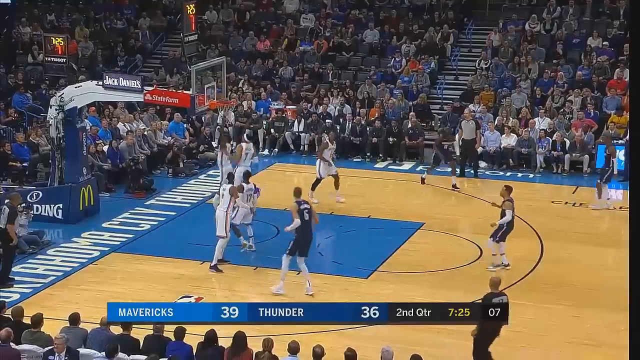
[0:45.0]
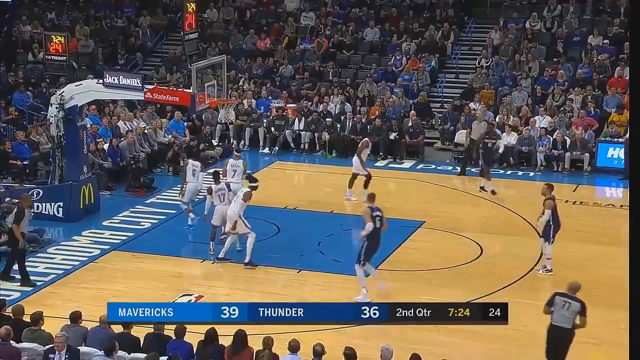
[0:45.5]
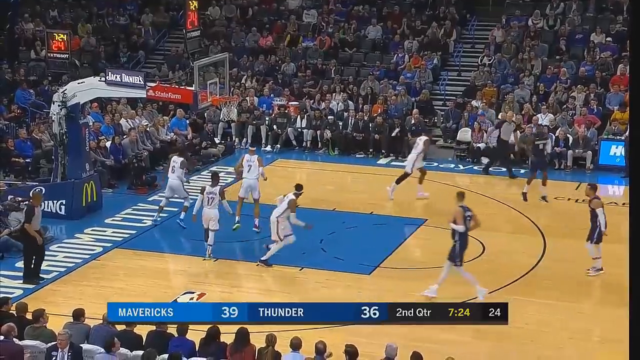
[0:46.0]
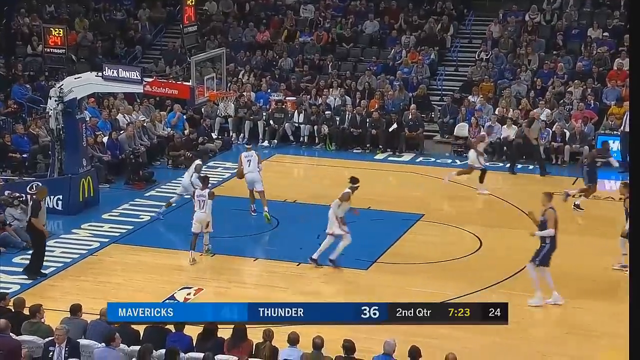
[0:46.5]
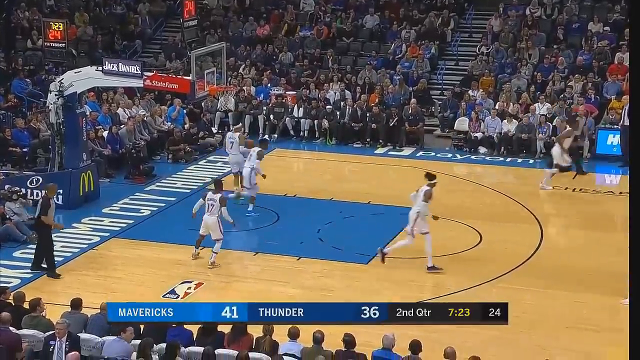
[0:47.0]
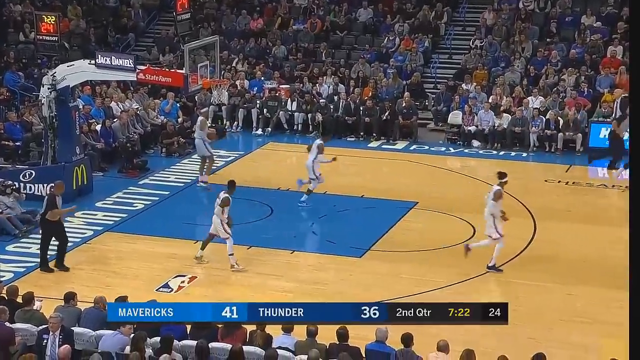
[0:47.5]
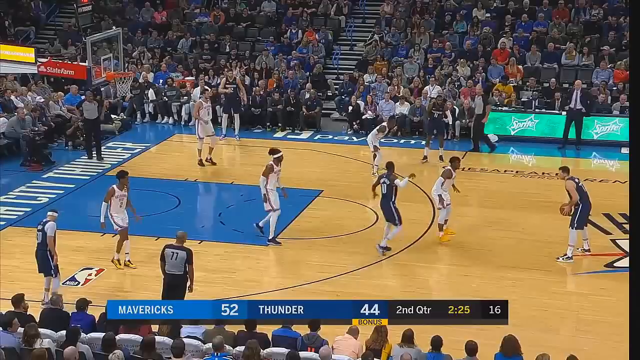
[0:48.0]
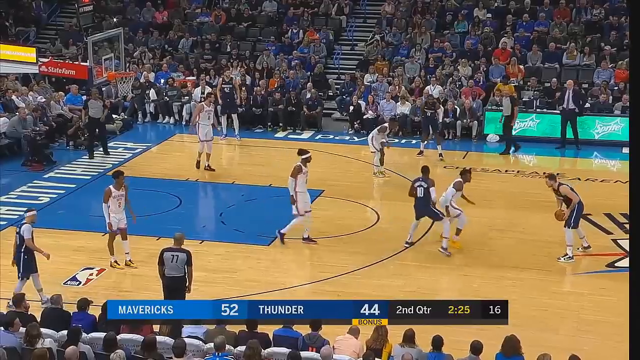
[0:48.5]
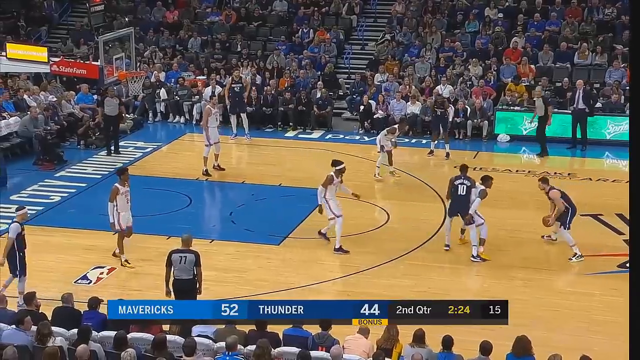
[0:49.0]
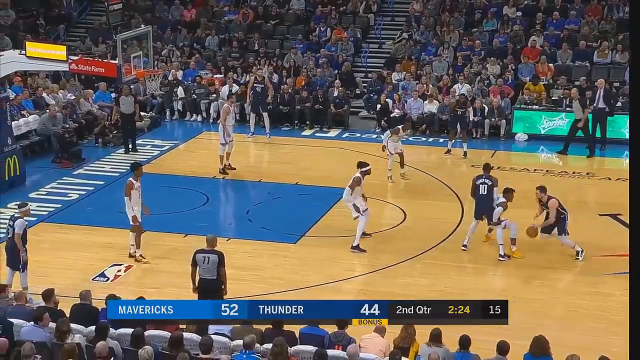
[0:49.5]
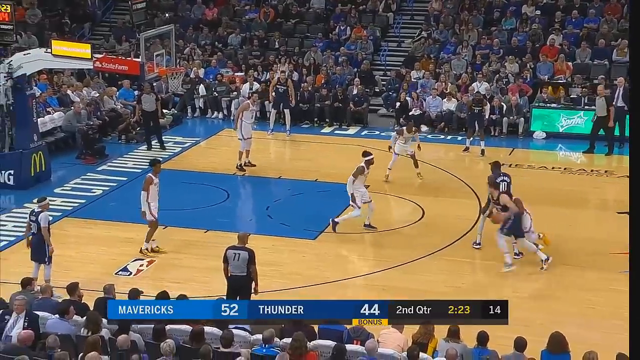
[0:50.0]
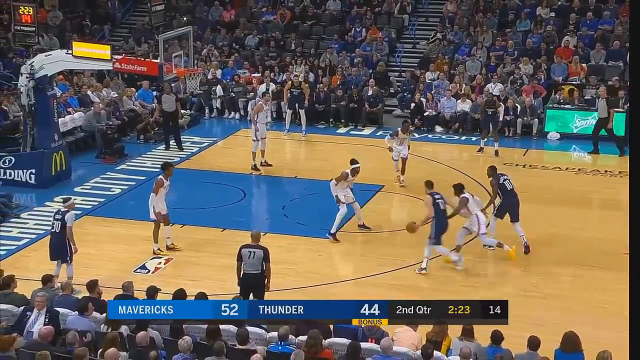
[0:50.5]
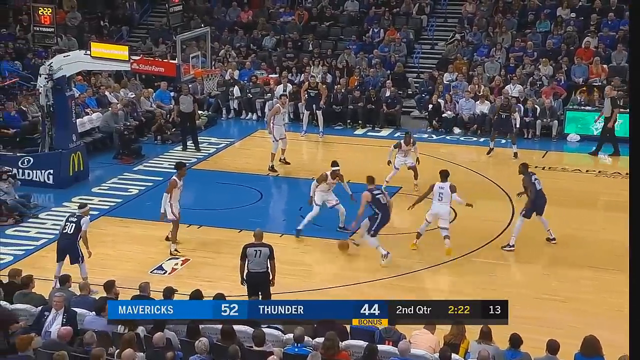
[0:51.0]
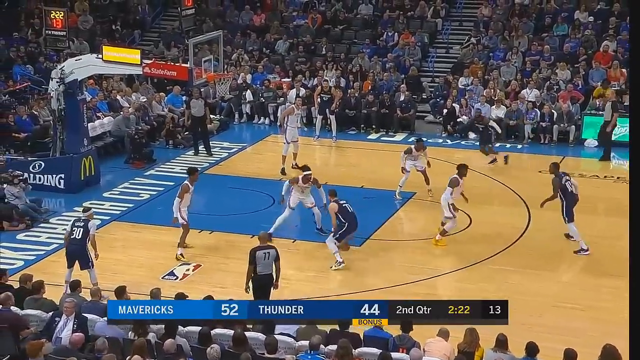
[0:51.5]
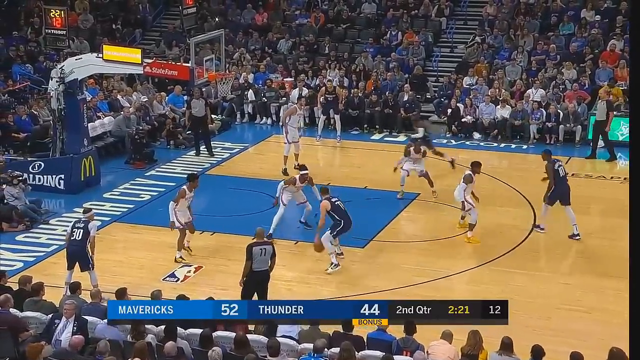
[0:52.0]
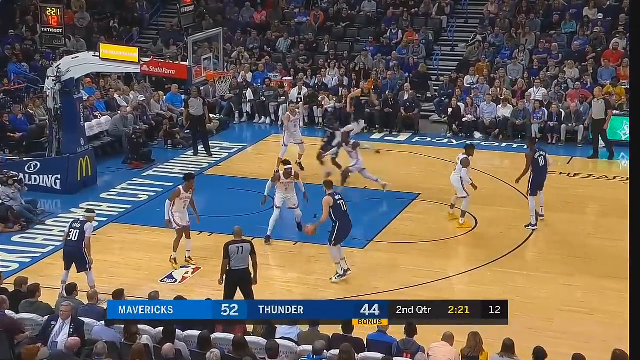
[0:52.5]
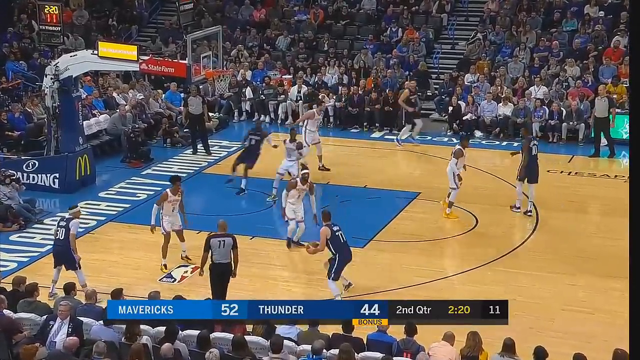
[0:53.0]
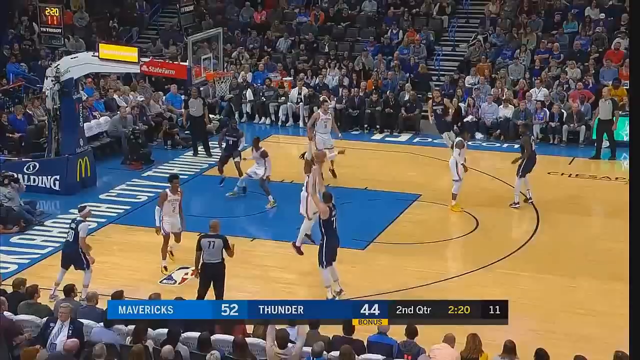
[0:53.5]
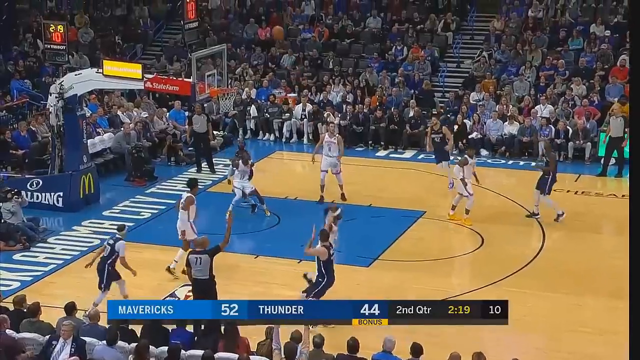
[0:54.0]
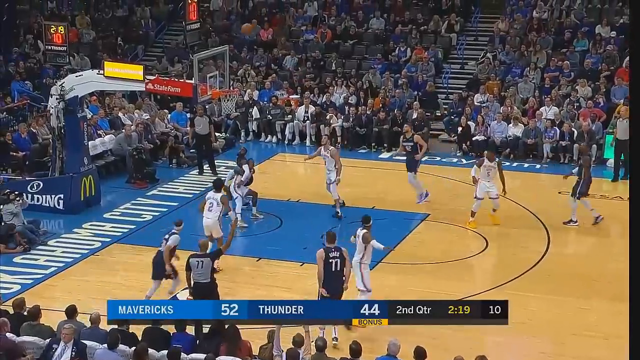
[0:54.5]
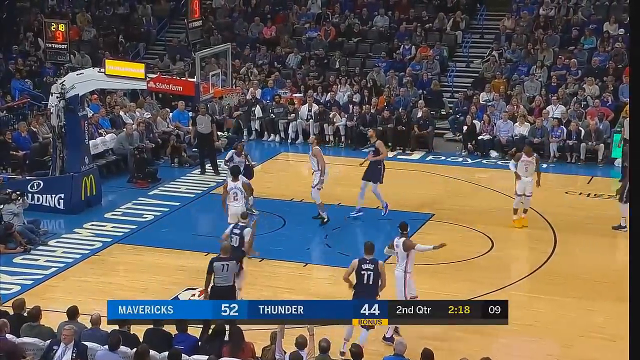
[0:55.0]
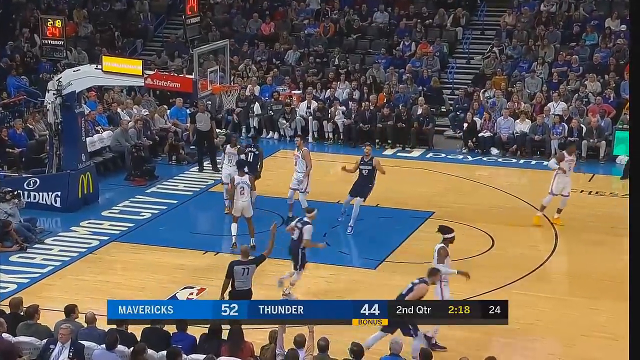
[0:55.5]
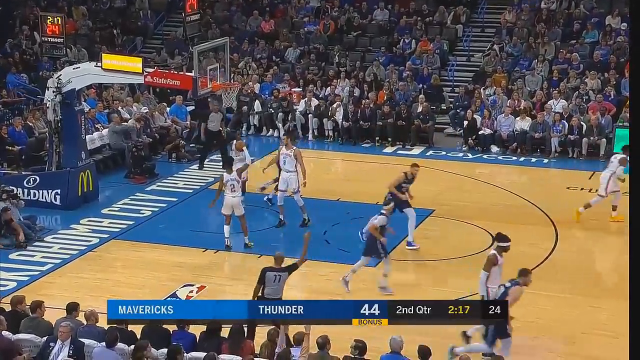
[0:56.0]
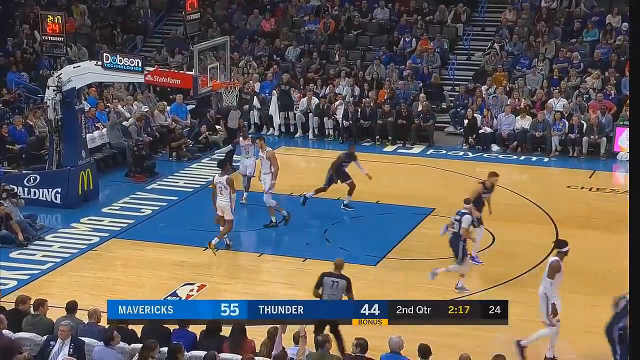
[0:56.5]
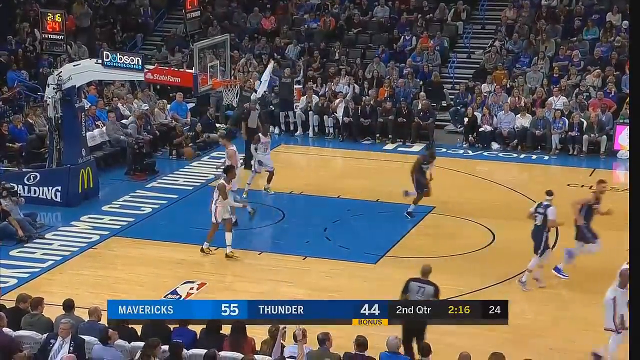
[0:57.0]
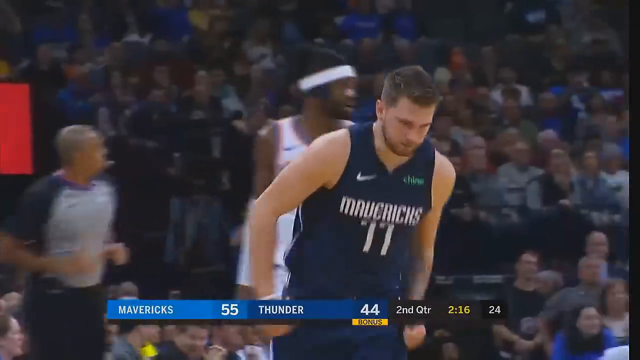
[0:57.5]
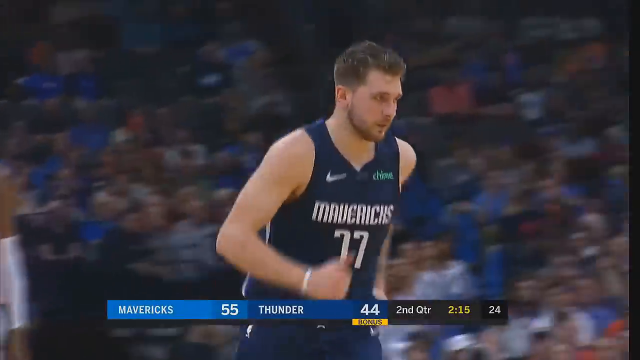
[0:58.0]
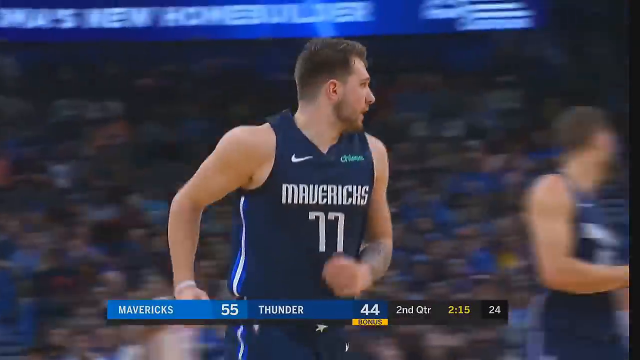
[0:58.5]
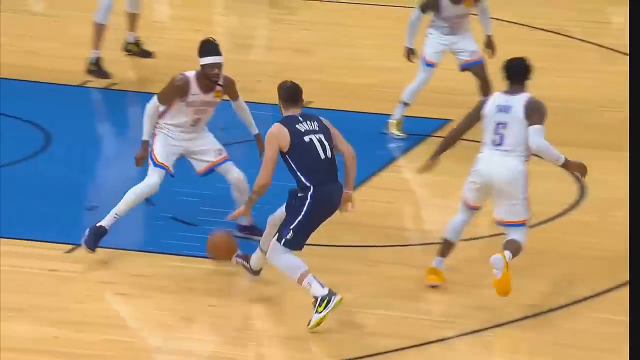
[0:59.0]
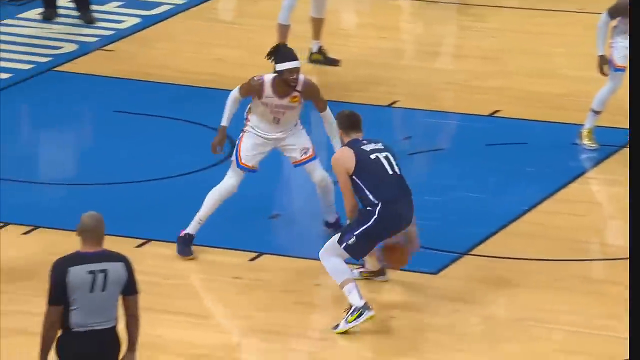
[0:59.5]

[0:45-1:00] Oklahoma City brings up the ball and makes a two-point shot near the basket, and then the video fast-forwards to Doncic having the ball again. He gets by his defender and back out past the three-point line without anyone really near him, and takes a three-point shot that no one challenges much. No one seems to be playing with a lot of urgency. He is then shown jogging back to the other end of the court to take a defensive position. His three-pointer changes the score to 55-44 with the Mavericks leading in the second quarter, winding down to about the two-minute mark. No other Oklahoma City baskets are shown besides the one at the beginning.